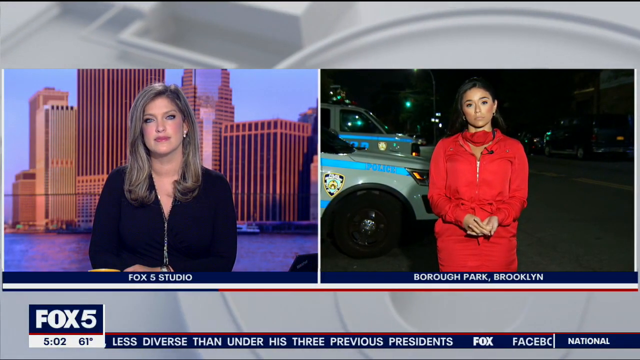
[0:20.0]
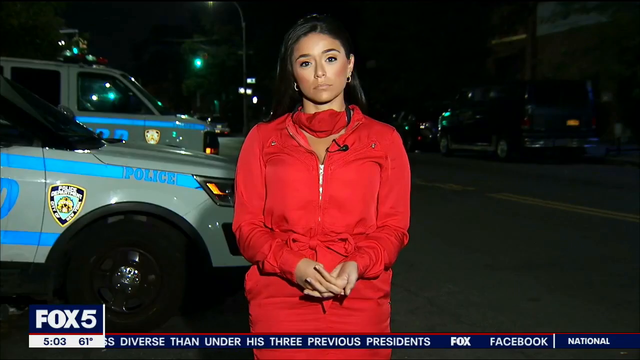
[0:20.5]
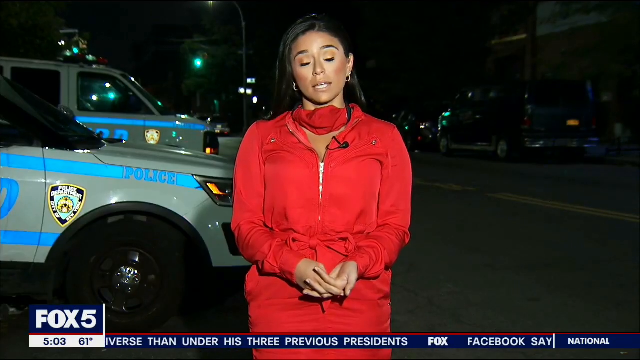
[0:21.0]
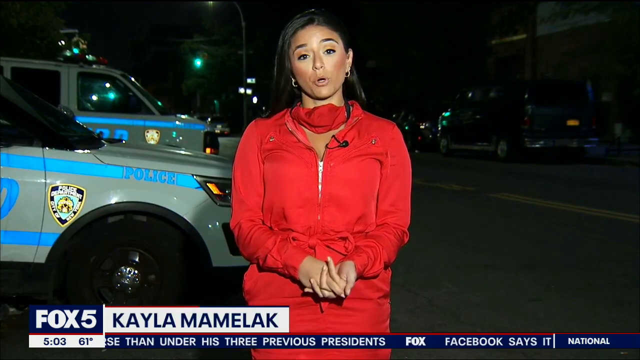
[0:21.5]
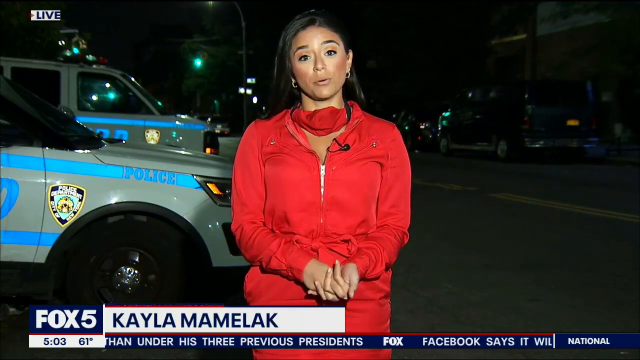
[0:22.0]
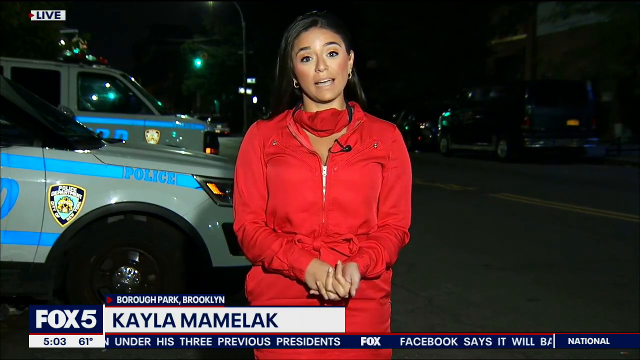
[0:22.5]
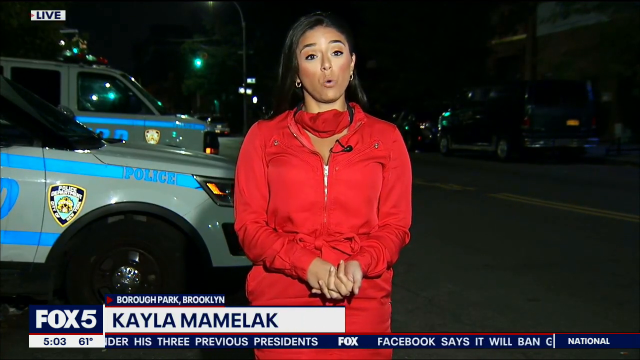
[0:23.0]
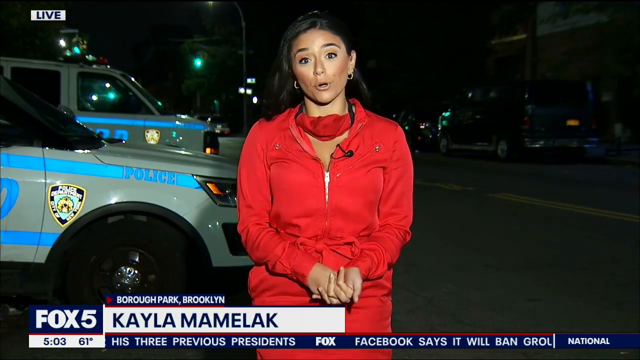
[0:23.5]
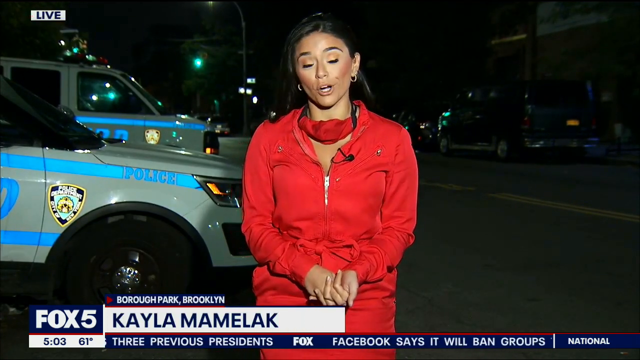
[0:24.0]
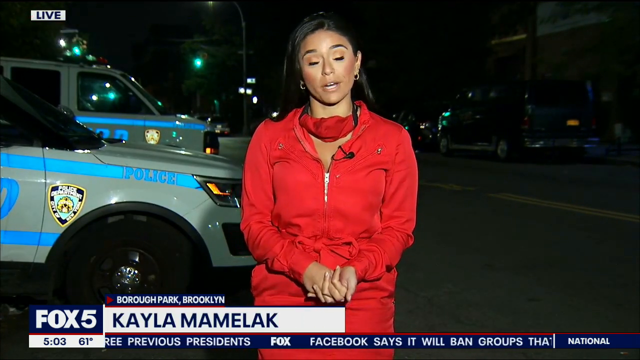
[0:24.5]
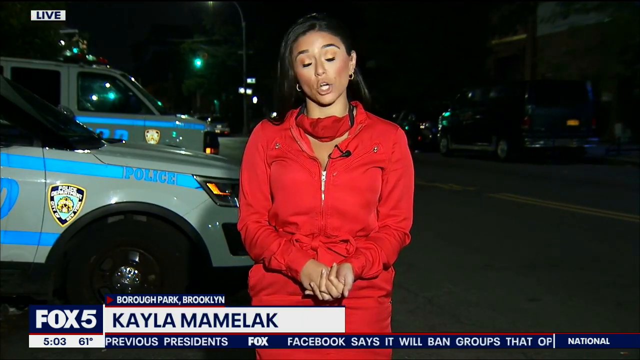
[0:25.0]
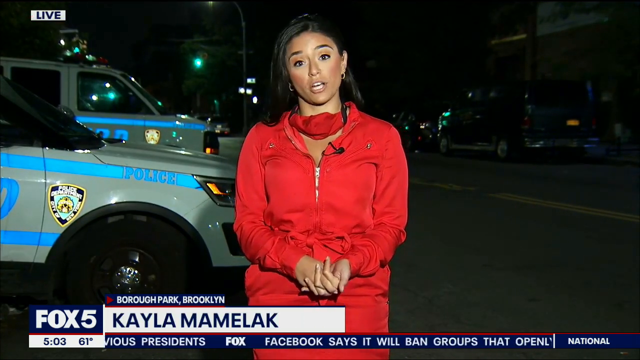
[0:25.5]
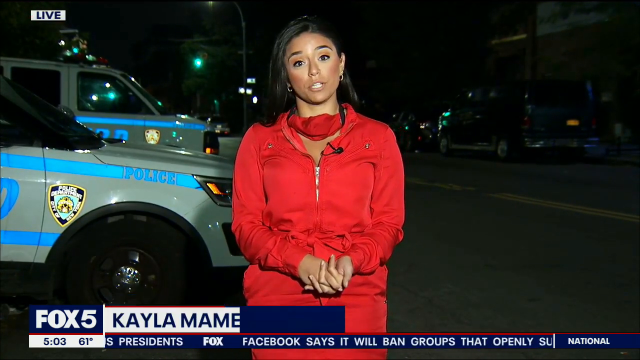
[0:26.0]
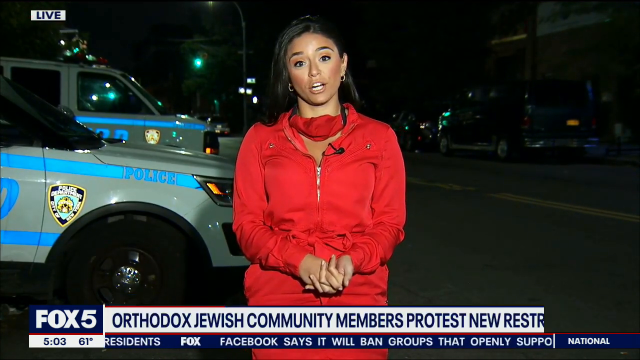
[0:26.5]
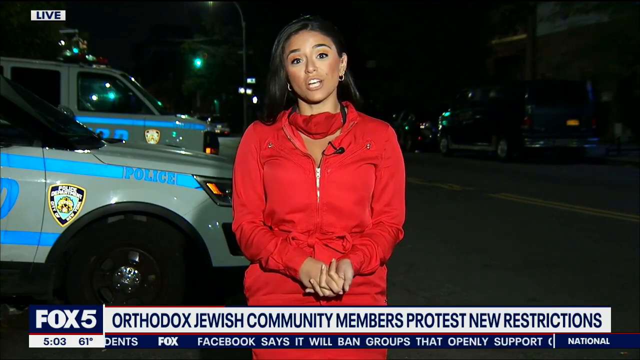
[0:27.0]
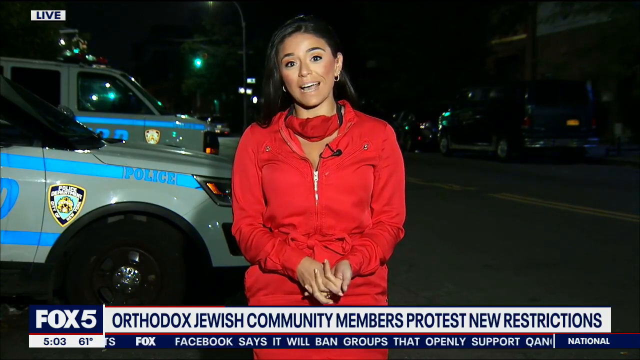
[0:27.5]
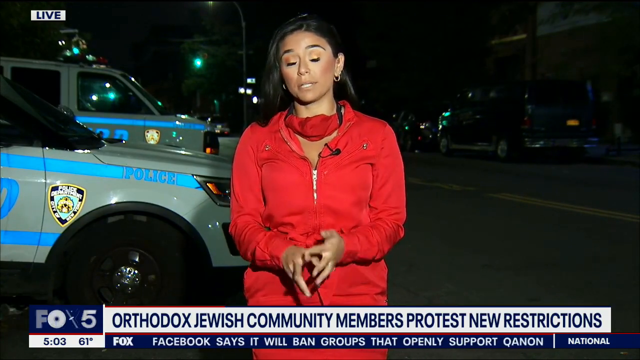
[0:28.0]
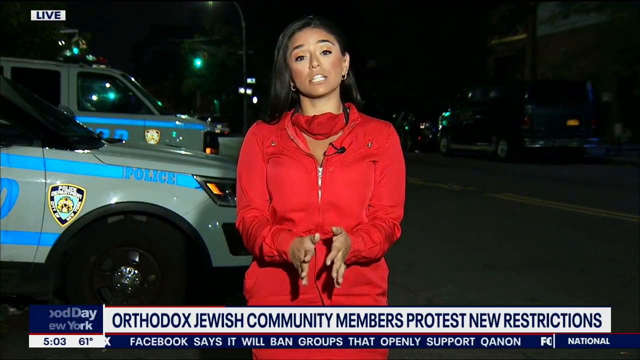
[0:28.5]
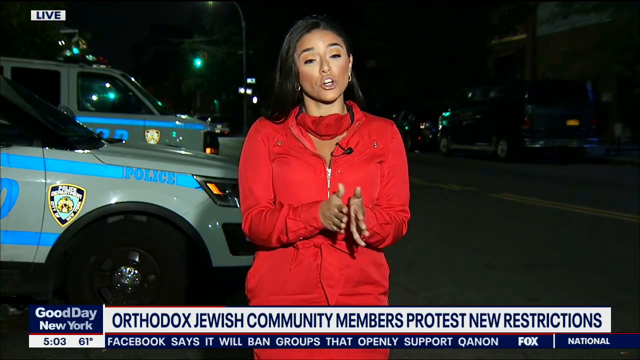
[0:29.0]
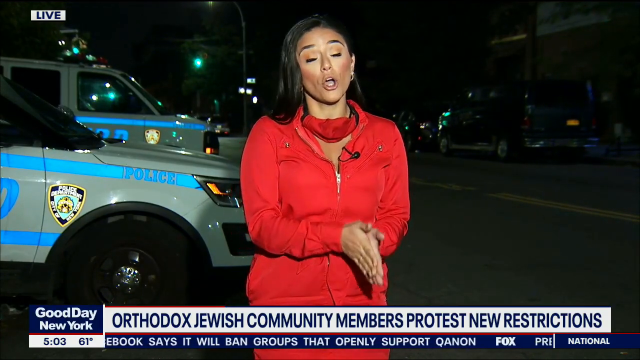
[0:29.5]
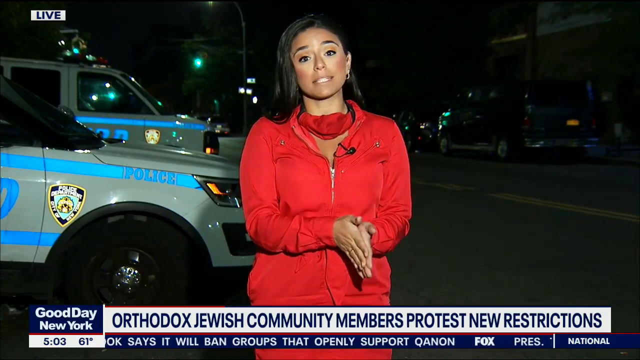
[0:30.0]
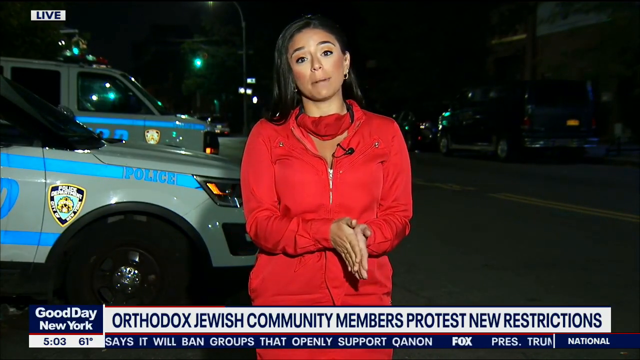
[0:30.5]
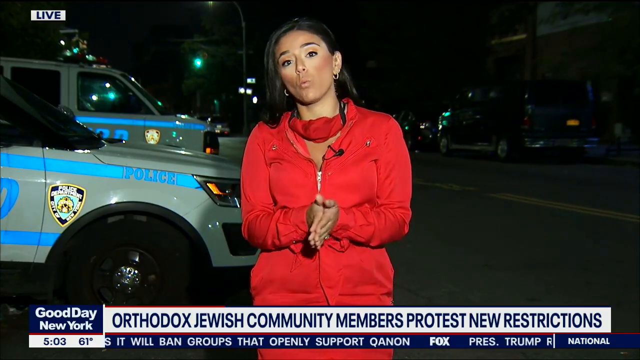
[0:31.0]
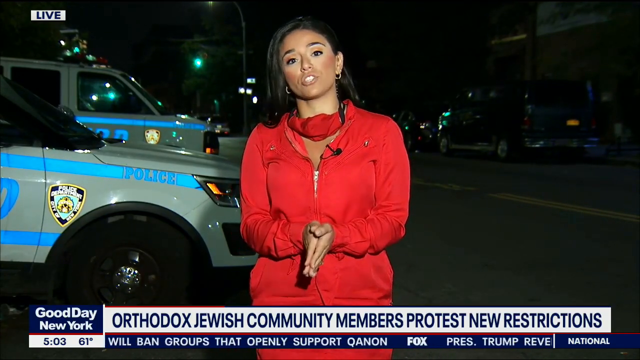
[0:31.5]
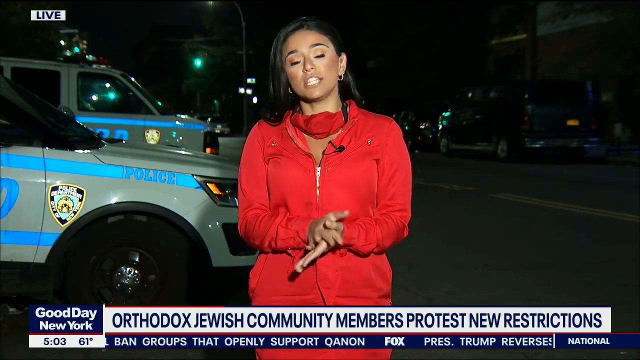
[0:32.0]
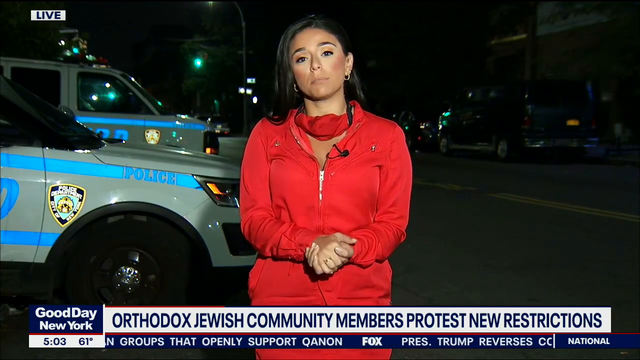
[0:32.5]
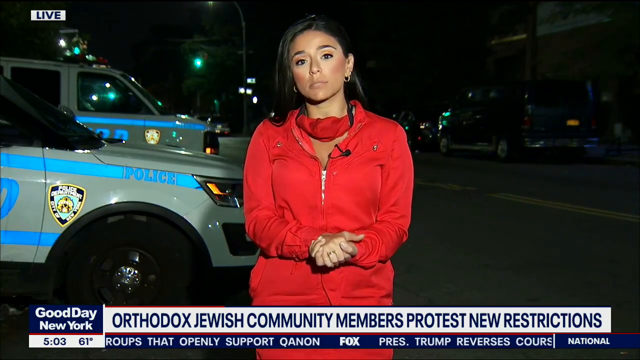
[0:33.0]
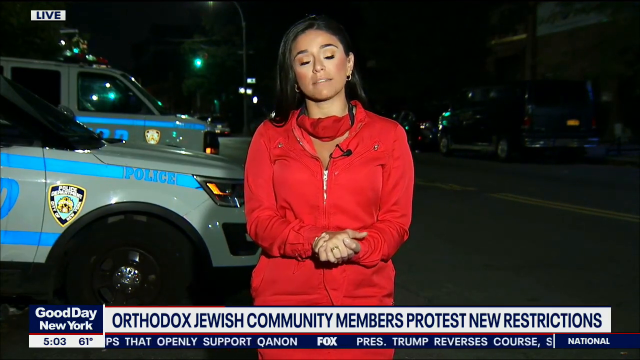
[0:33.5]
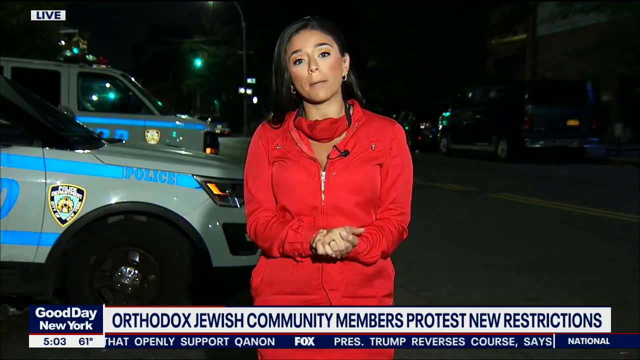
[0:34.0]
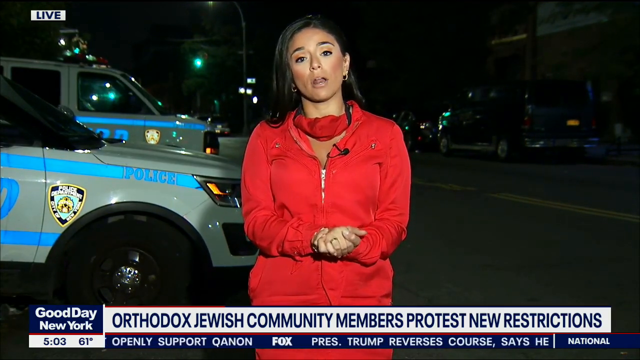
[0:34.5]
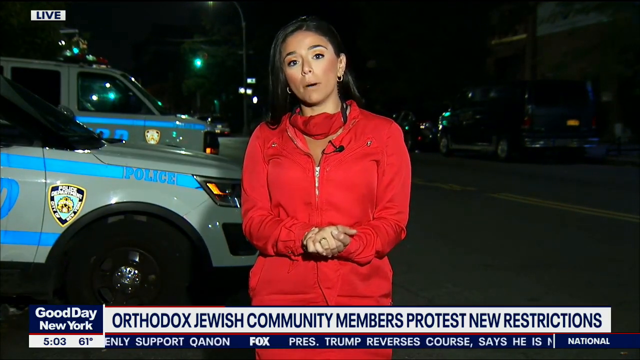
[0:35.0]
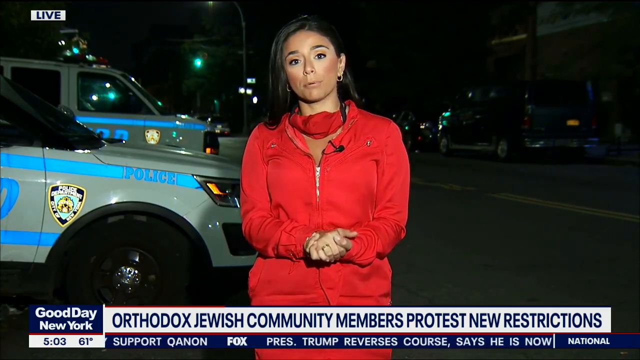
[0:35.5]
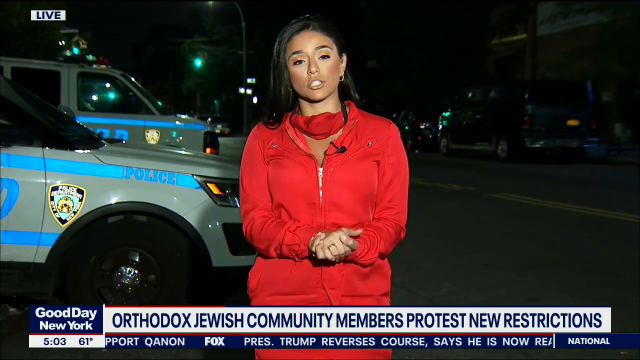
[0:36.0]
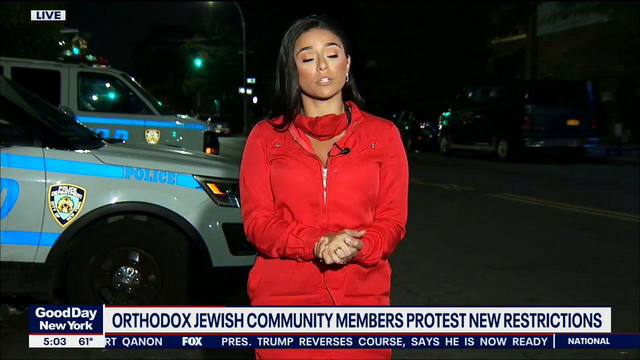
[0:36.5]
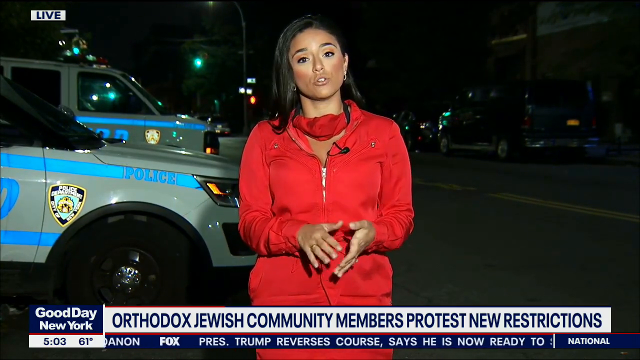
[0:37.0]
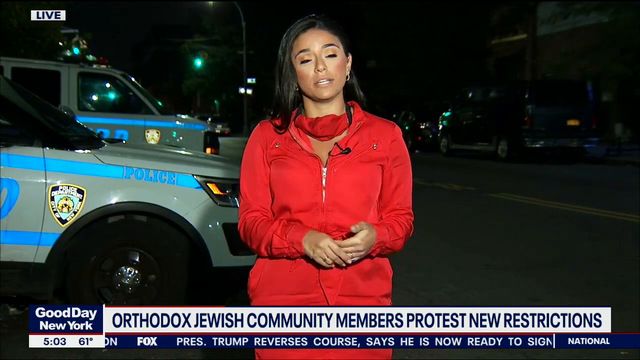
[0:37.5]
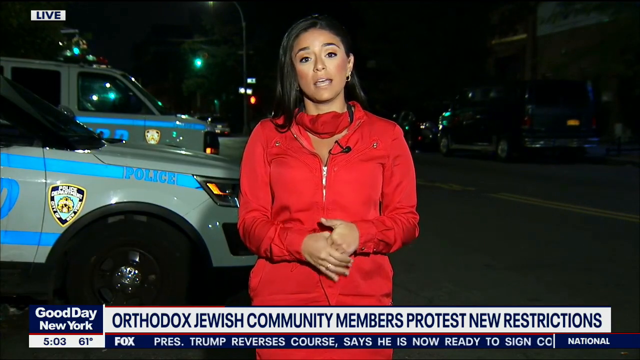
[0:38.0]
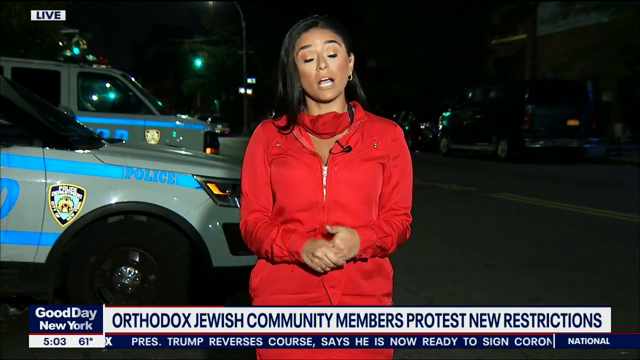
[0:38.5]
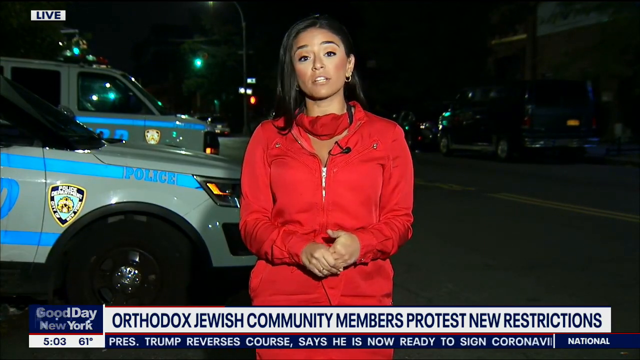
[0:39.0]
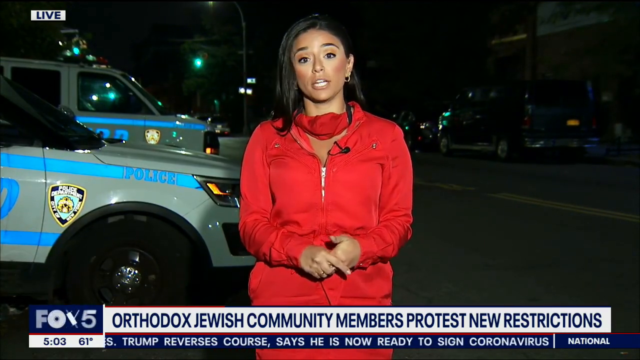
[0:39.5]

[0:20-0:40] A recording of a news clip is split into two sections. On the left, a female news reporter sits at a desk in the studio. She wears a black top with a zip down the middle and has her hands in front of her, resting on the desk. Behind her is an image of skyscrapers, and beneath her is a small blue bar with white text reading "Fox 5 studio". On the right, a woman dressed all in red stands with police cars behind her. She wears a neckerchief, her hands rest against each other in front of her, and she looks straight at the camera. Below her, white text in a dark blue box reads "Borough Park, Brooklyn". The Fox 5 logo is in the far left corner. Both women stare straight ahead into the camera before the image focuses on the right-hand side, showing the woman standing outside. Next to the Fox 5 logo, a white bar unravels from left to right, and her name appears in navy blue text: "Kayla Mamelak". A blue bar underneath carries rolling headlines. The woman speaks to the camera, shakes her head and nods, her fingers interlocked as she holds her own hand. At the bottom, a white text banner unravels from left to right with the words "orthodox Jewish community members protest new restrictions" in blue text. The woman separates her hands, places them together in a prayer position, and bounces her hands from left to right.